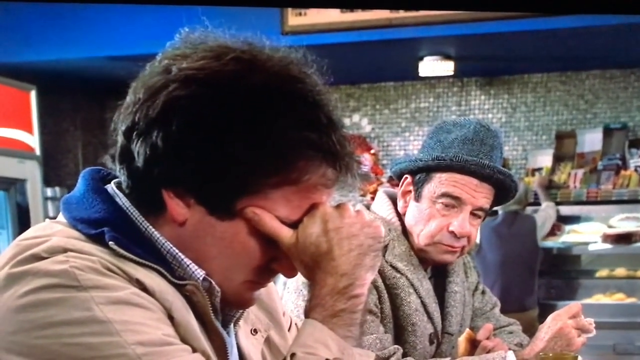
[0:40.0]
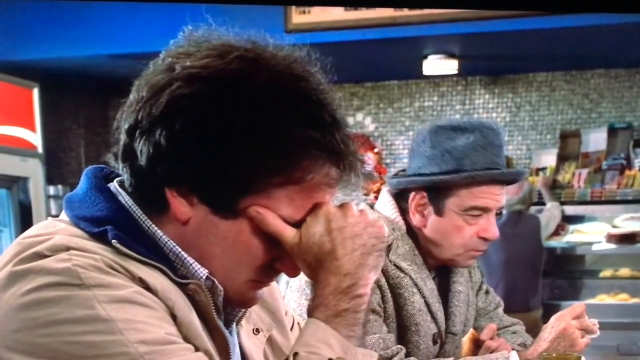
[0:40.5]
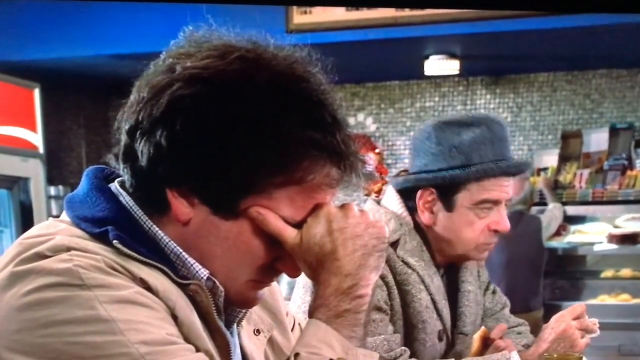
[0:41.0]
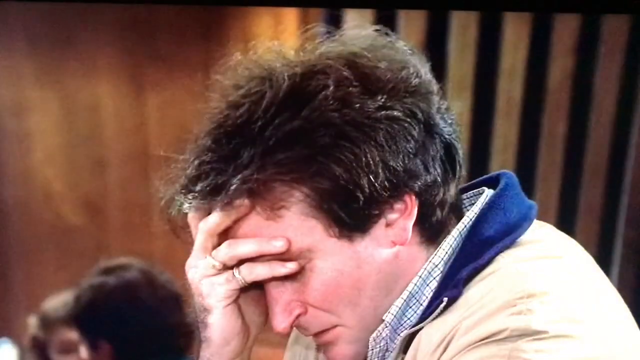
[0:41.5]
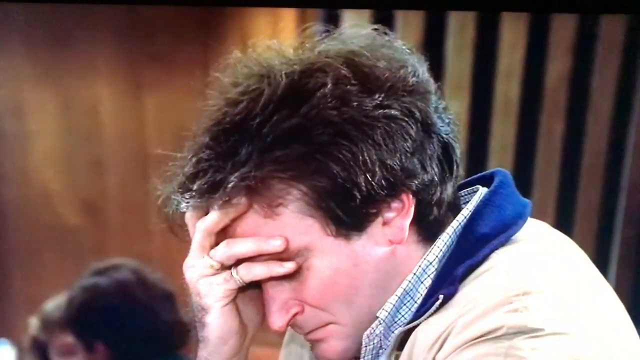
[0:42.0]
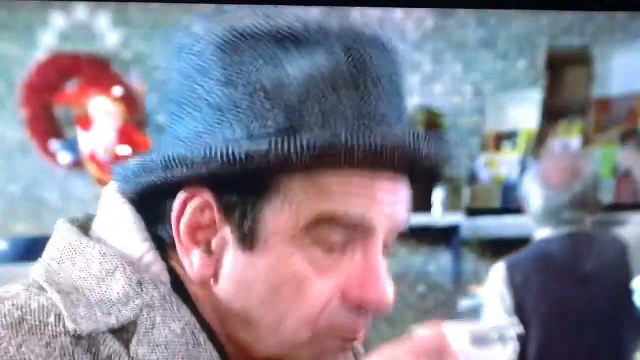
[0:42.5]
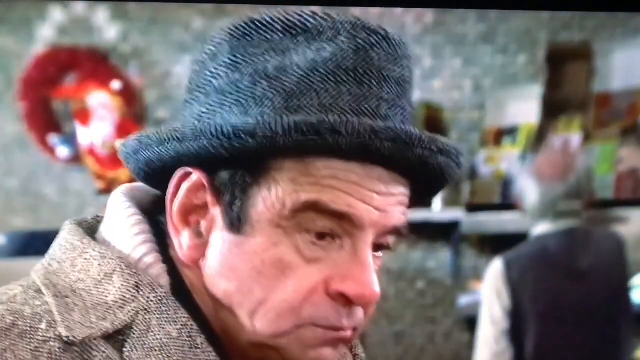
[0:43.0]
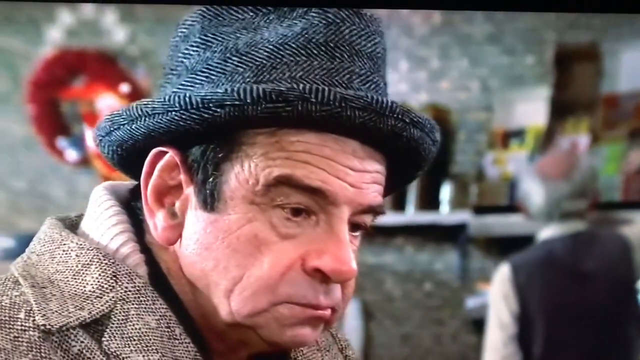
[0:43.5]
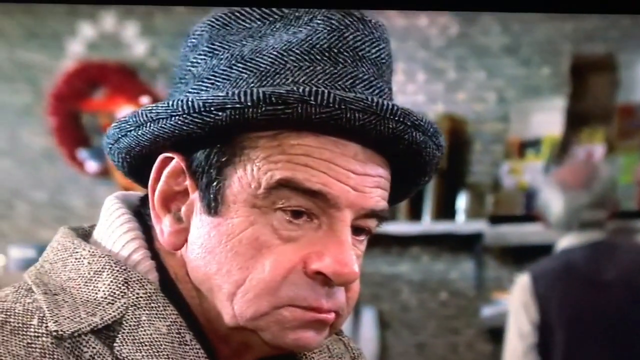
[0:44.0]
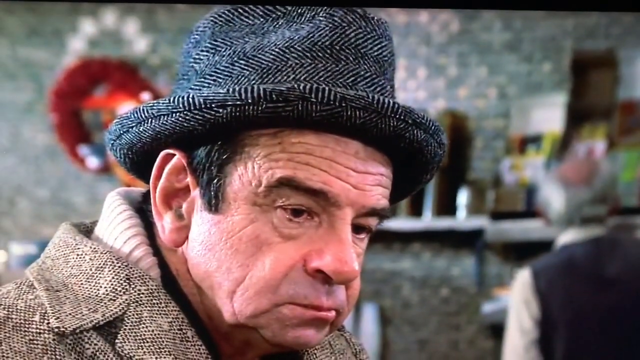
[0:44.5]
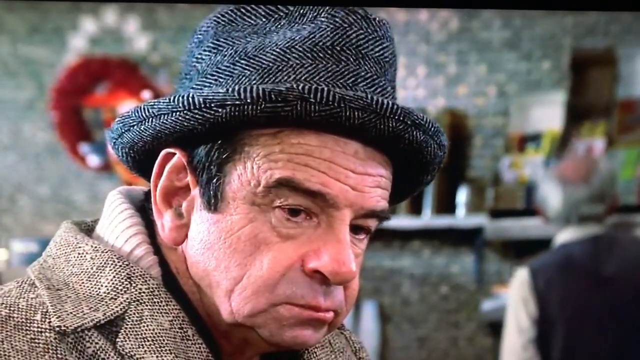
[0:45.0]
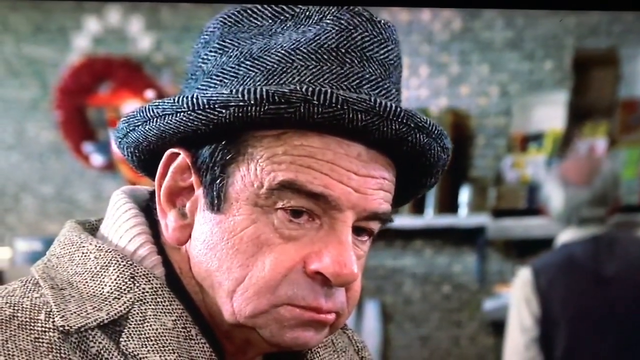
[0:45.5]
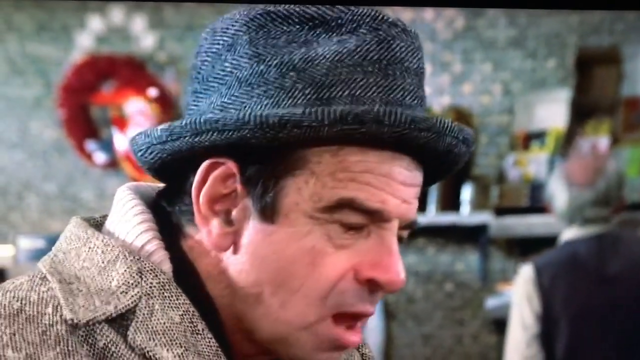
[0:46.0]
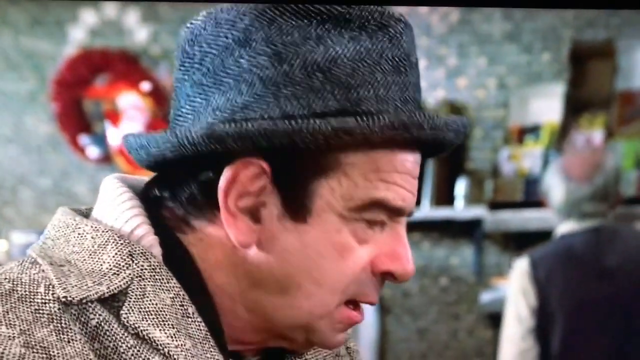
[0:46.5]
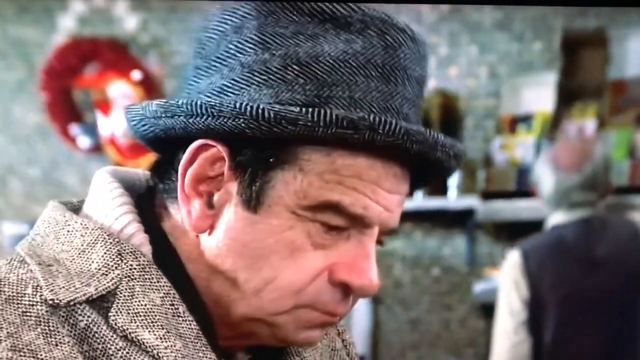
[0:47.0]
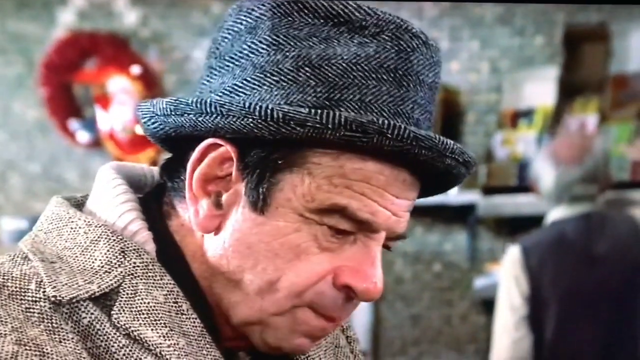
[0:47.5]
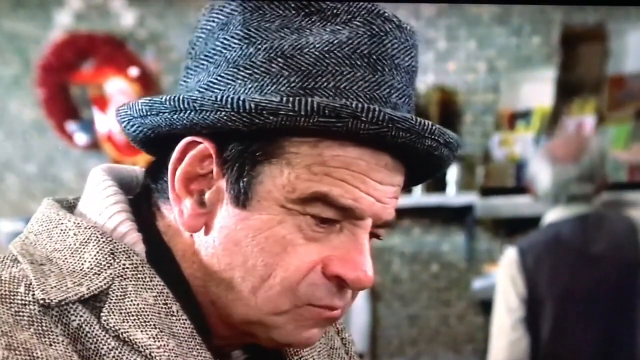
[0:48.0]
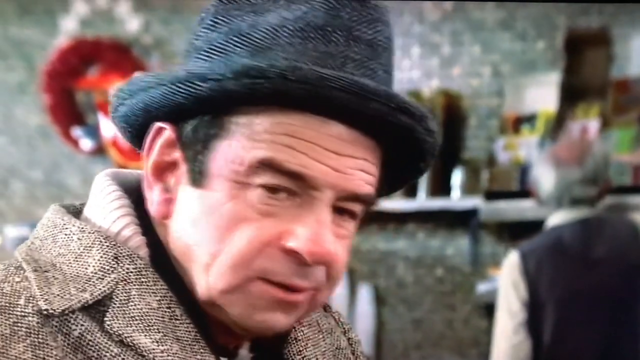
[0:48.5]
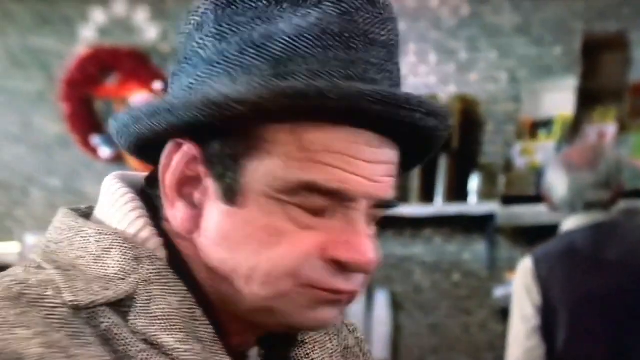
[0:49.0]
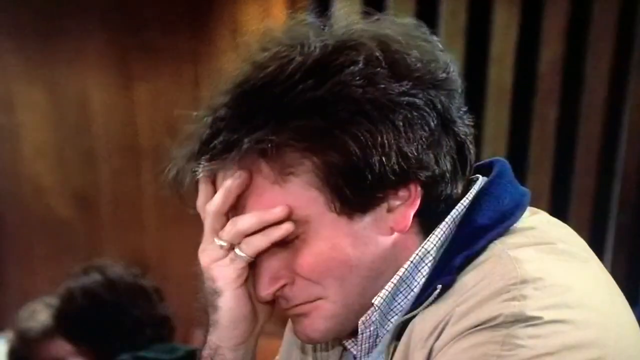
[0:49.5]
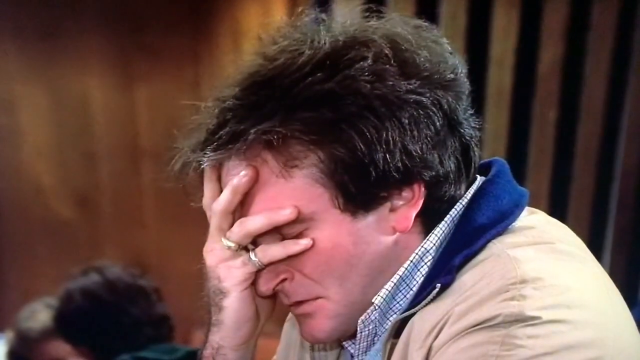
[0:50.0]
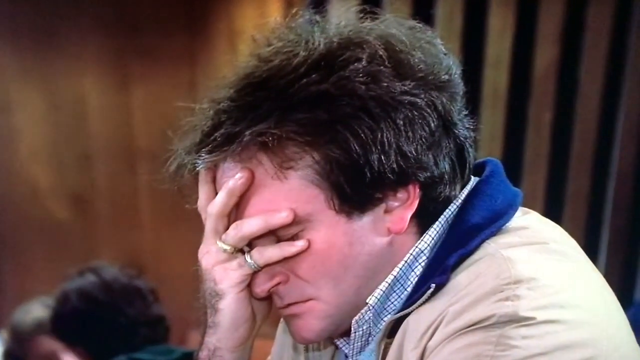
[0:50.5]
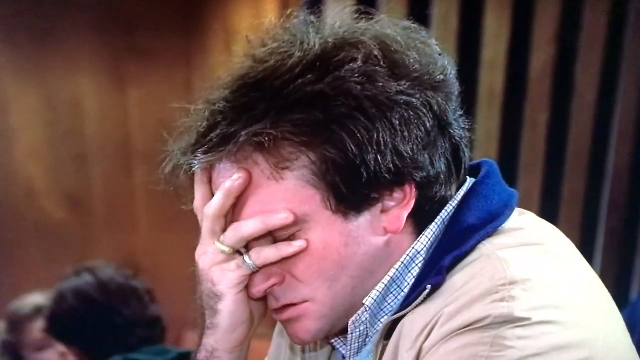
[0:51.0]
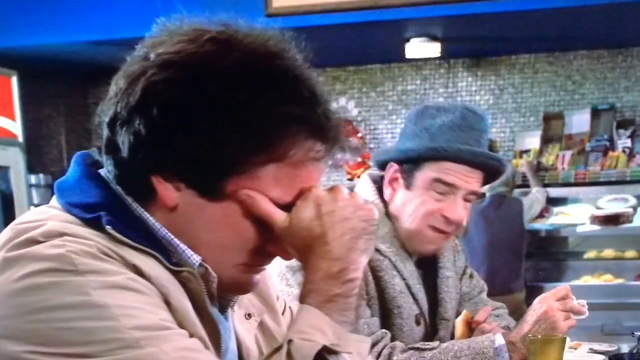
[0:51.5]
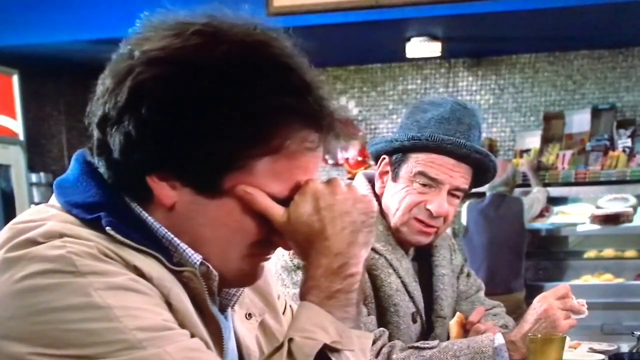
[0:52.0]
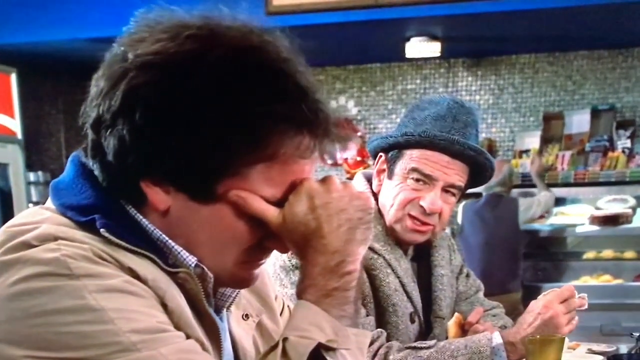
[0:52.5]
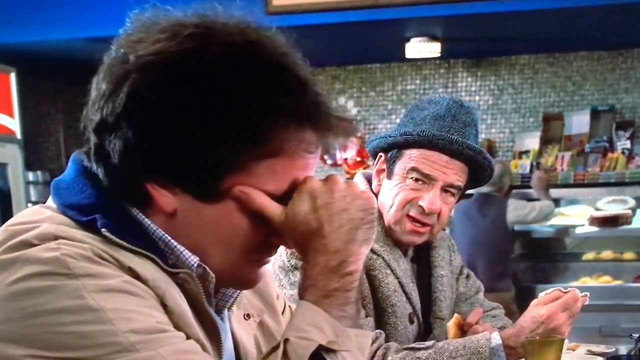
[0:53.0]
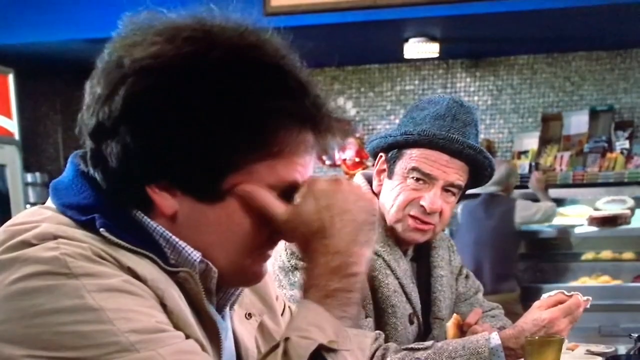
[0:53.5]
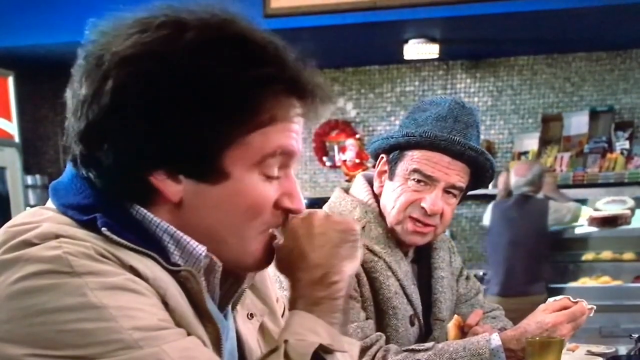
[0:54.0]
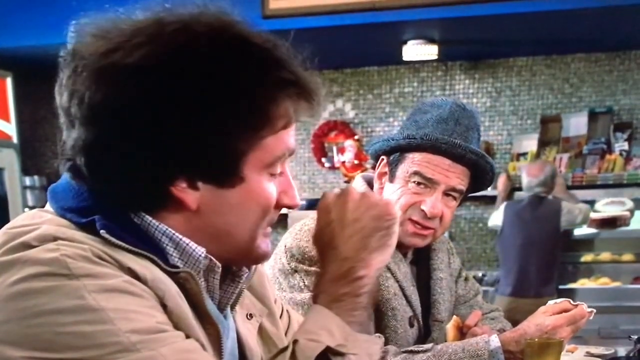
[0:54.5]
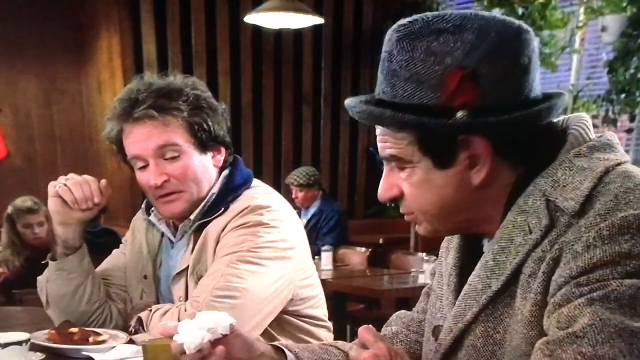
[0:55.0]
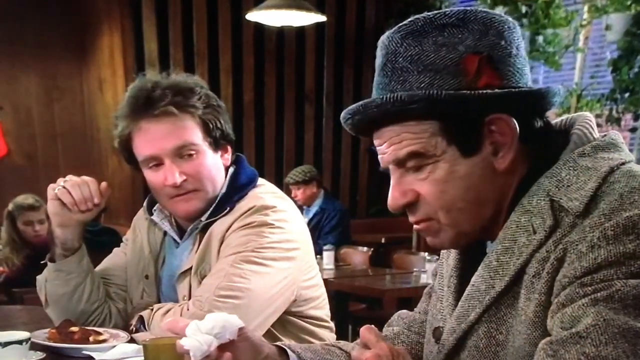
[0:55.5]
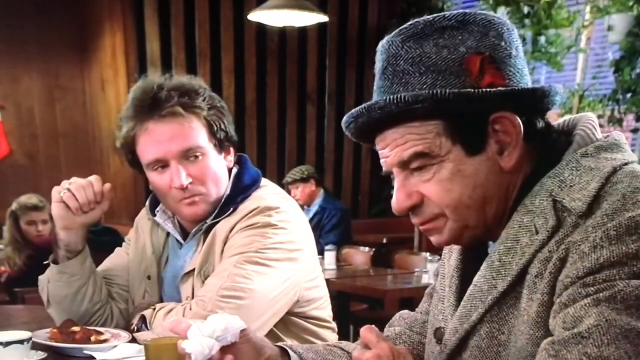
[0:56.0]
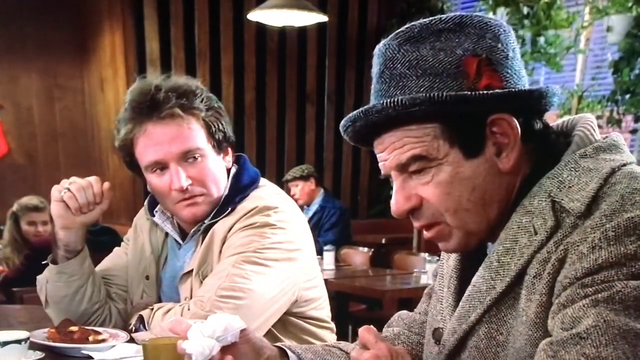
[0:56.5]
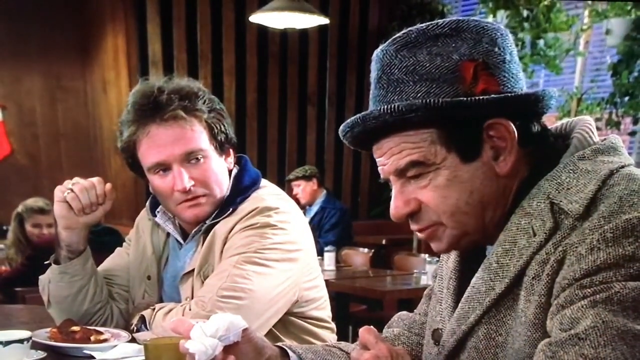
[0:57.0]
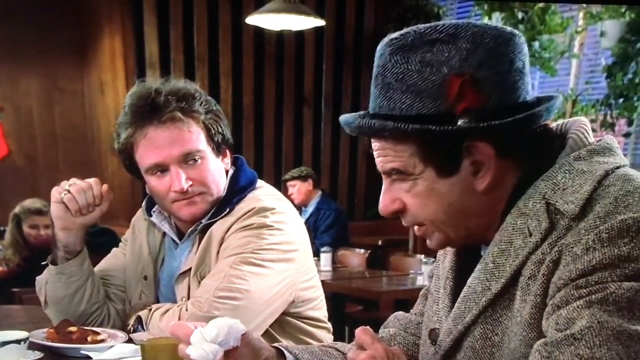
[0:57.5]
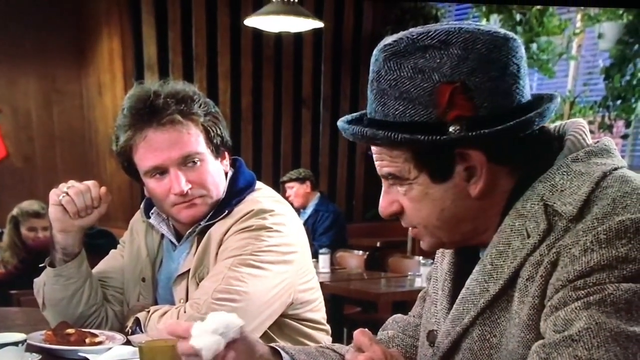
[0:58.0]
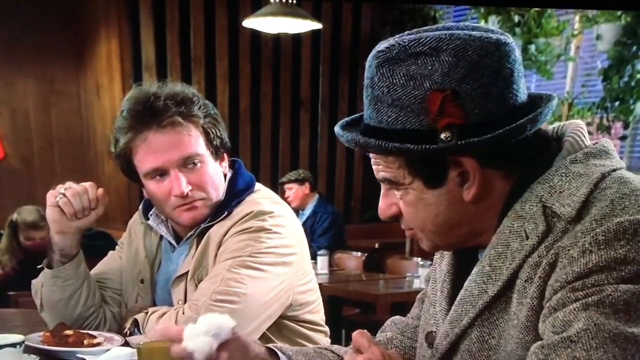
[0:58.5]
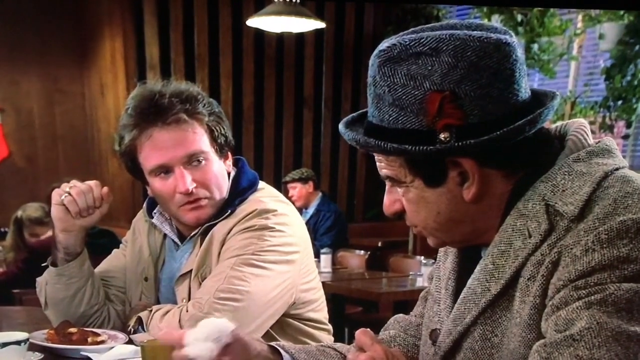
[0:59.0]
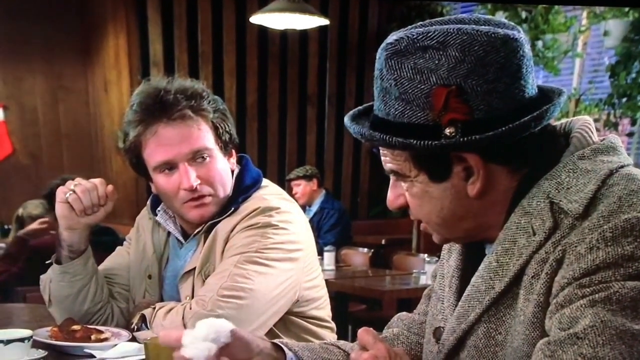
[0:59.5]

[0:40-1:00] The close-up continues without much happening. The next shot shows the man who seems to be having a hard time as he speaks a word, and then a shot of the man with the hat, who is very startled and seems surprised or shocked by what the other man said. He seems shocked at first but then seems to brush him off, possibly trying to comfort him or talk sense into him. The man having a hard time is still looking down at the counter with his hand on his forehead, listening. After the man with the hat says a few words, the other man takes his hand off his forehead and looks at the man on his left, looking as if he is surprised or shocked by what he hears.